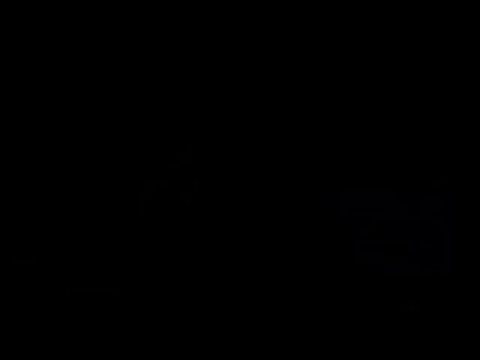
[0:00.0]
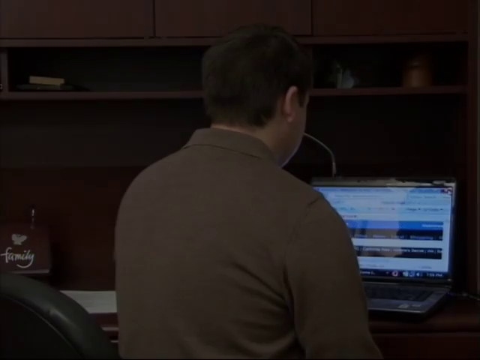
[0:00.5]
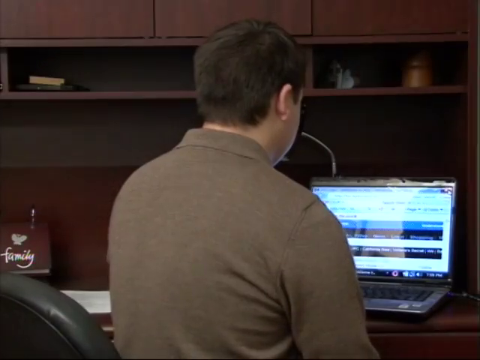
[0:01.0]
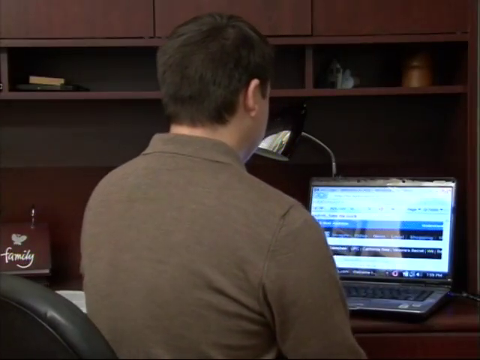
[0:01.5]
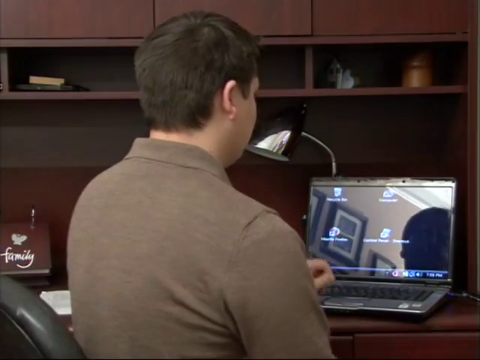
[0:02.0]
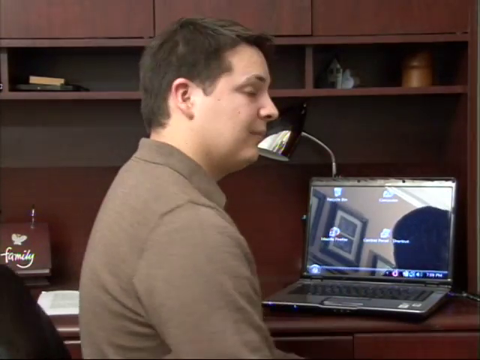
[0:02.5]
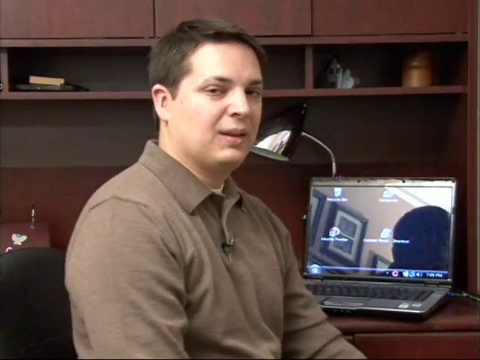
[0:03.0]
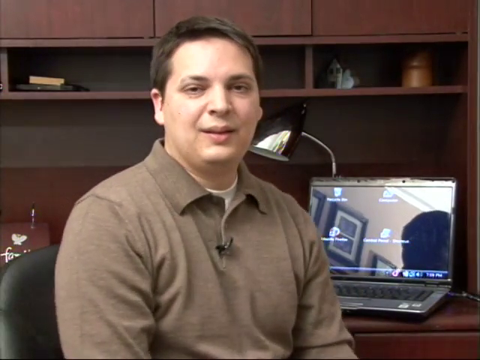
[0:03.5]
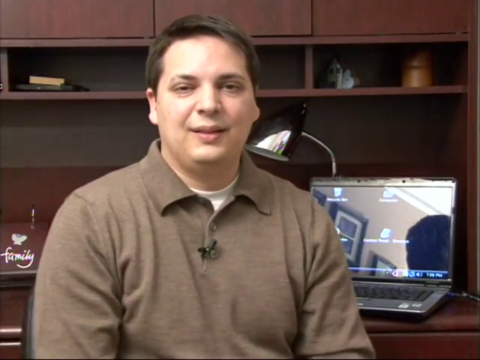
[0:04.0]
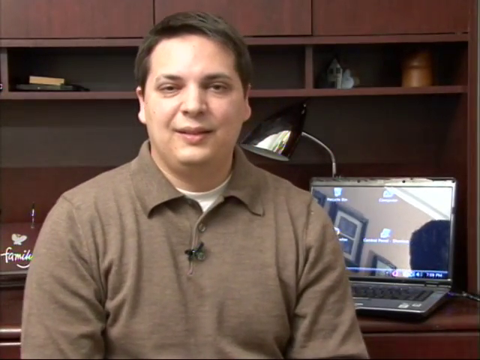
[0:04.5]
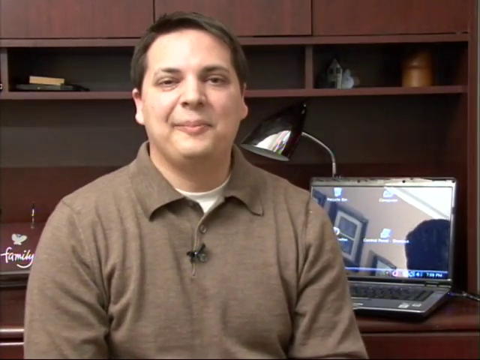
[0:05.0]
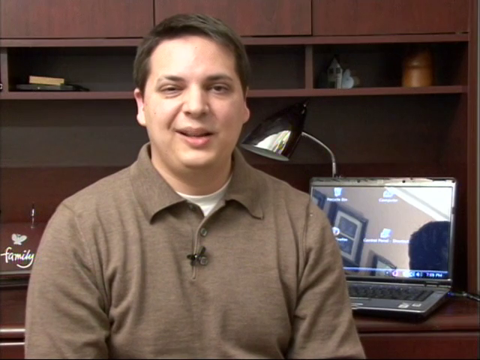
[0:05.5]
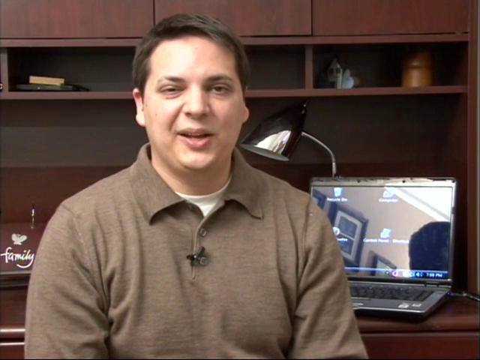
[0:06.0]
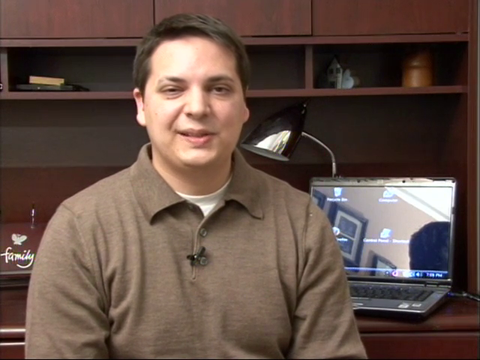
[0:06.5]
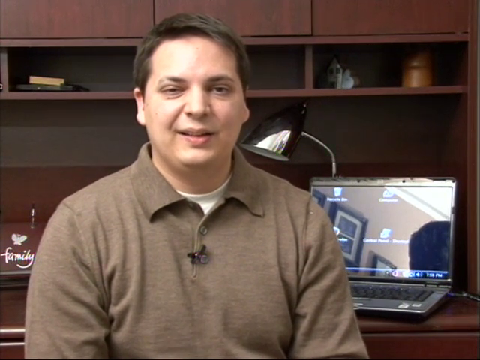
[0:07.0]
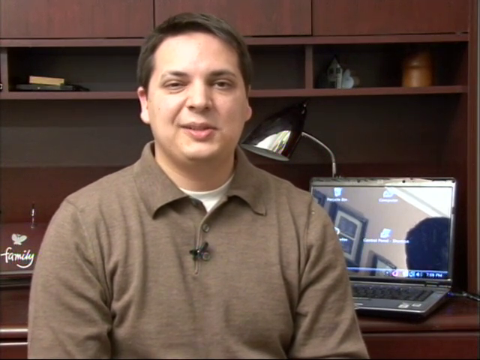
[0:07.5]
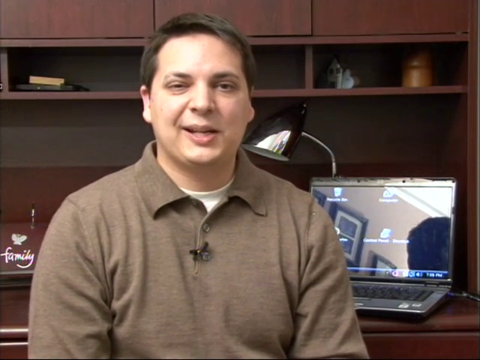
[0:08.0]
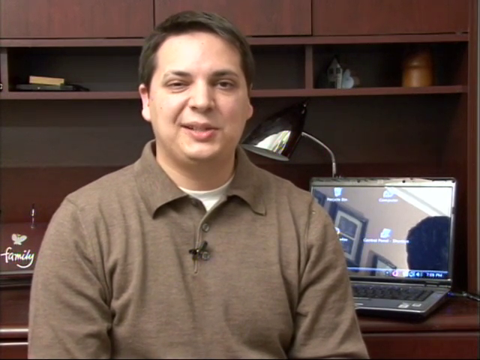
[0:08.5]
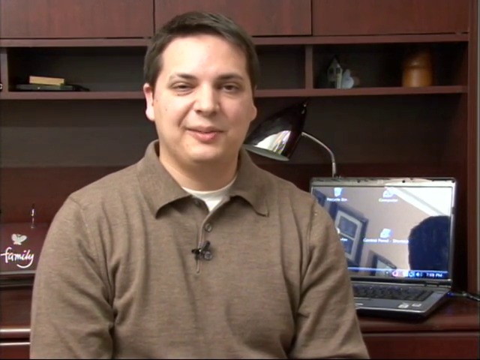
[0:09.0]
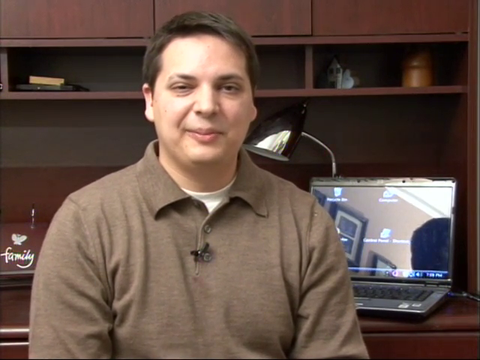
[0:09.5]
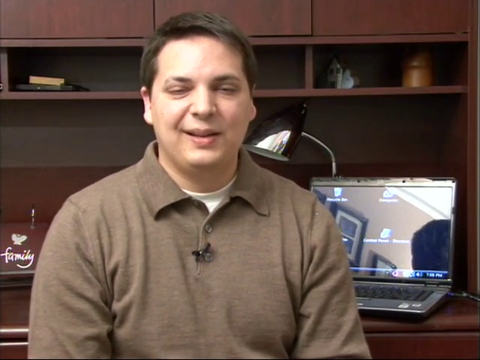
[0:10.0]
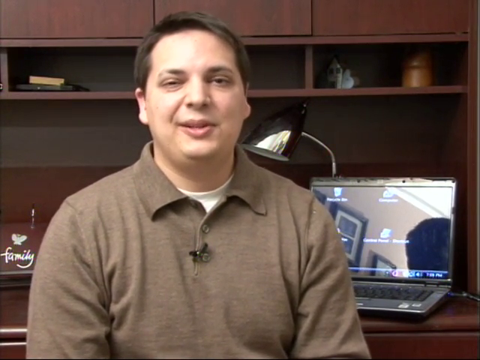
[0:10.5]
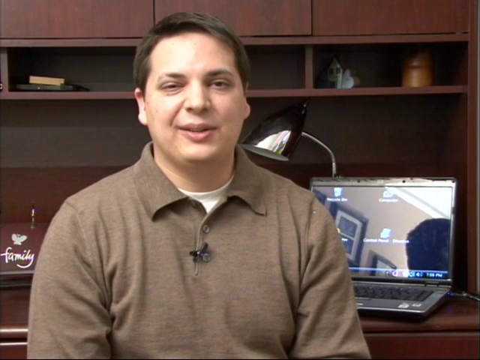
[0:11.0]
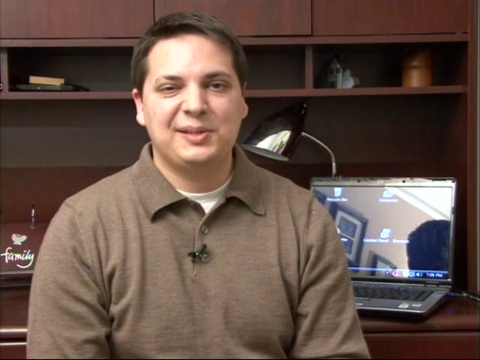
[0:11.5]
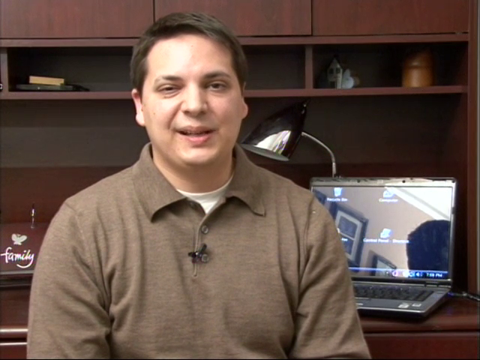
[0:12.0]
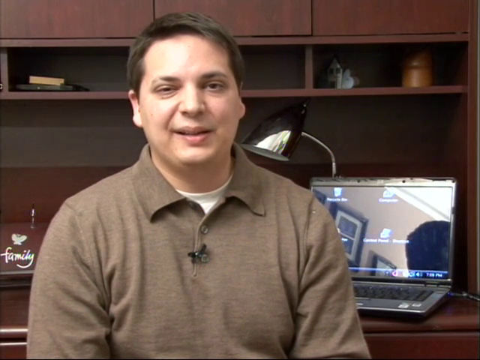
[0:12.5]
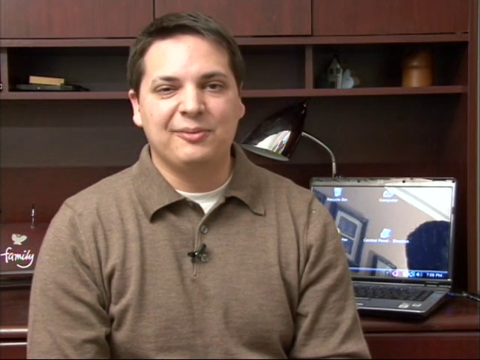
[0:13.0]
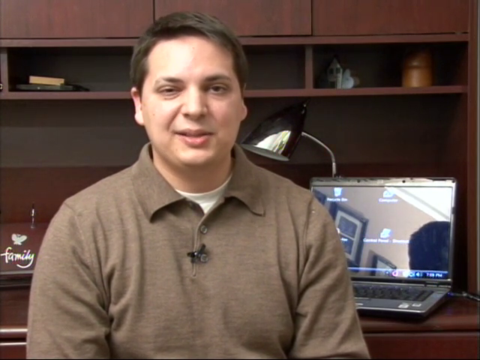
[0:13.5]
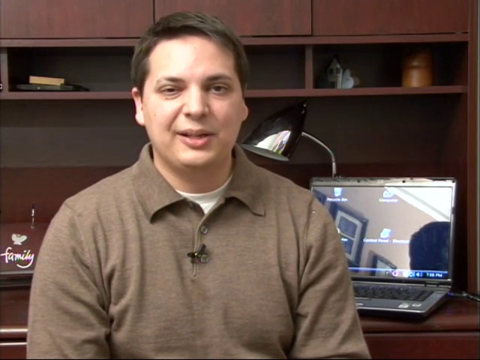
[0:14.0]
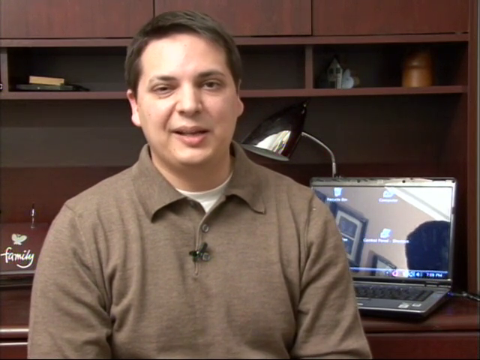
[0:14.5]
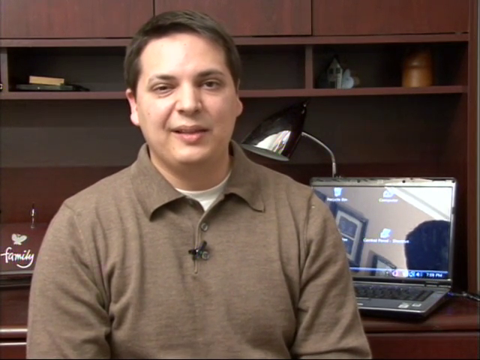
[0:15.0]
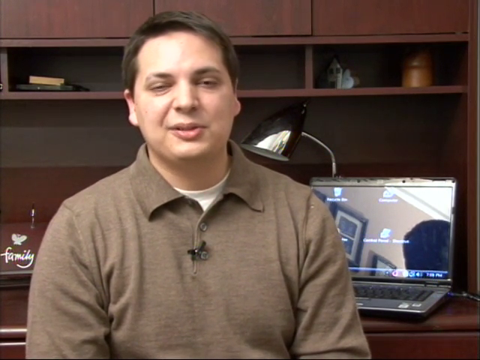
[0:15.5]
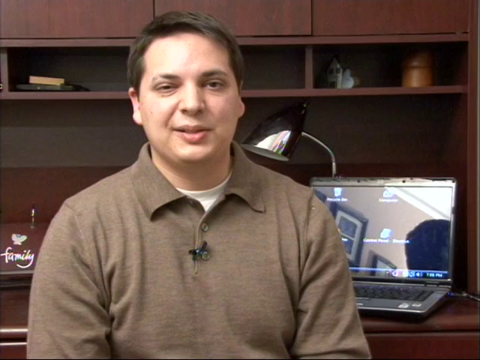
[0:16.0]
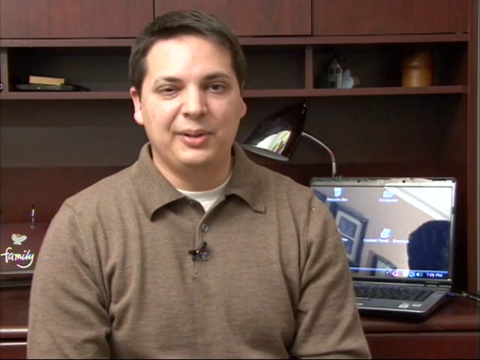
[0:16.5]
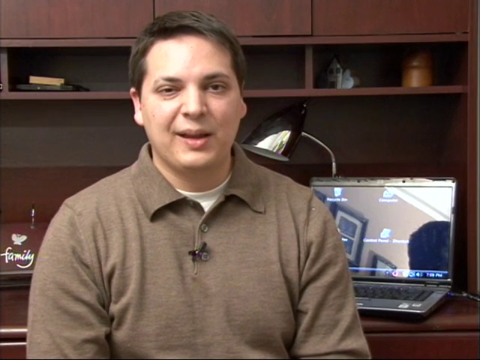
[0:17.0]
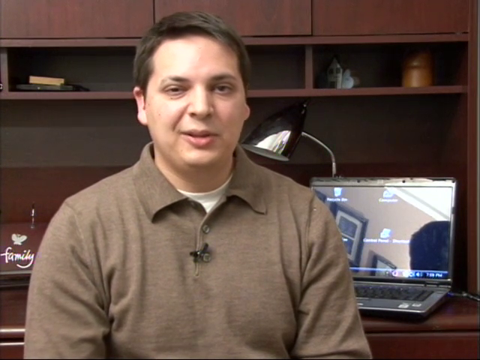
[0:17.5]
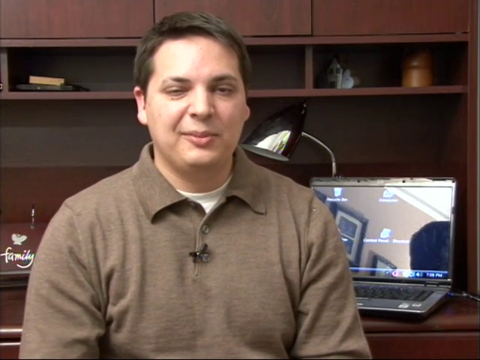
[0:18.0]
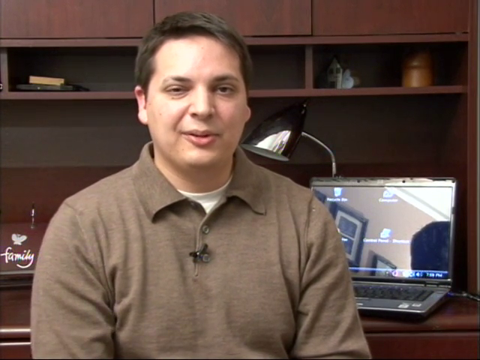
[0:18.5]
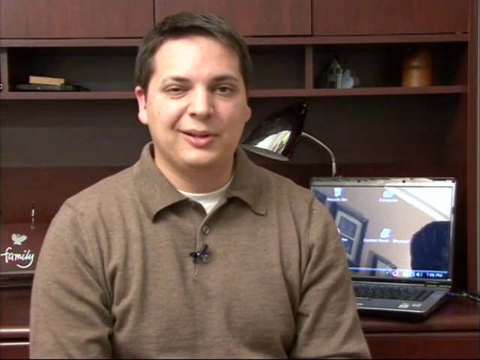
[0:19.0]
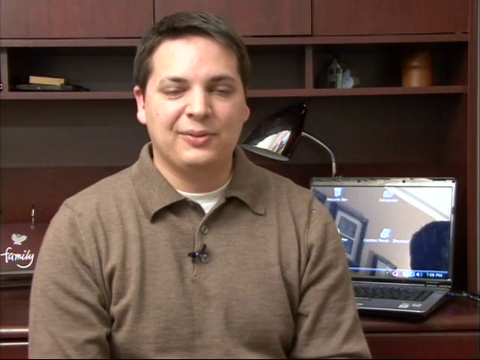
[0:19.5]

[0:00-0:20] This appears to be an instructional or training video, seemingly about technology. A person at a computer turns around to face the viewer and talks for quite a while, apparently introducing the subject matter, which seems to possibly be about computers. The video looks somewhat old, and the speaker is dressed in casual, business-casual clothing. The setting is a desk with some decorations on it, including a lamp and a sign that says "family".